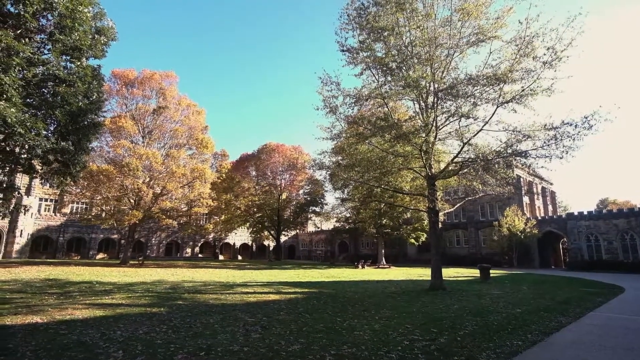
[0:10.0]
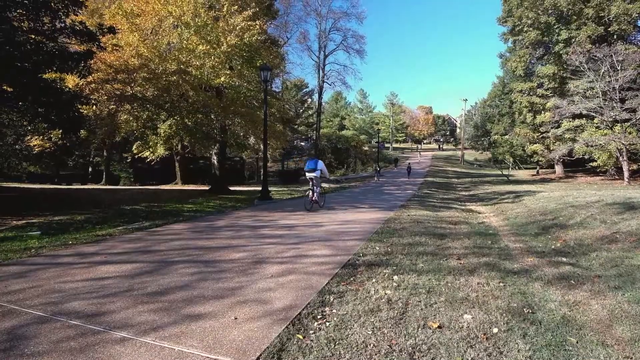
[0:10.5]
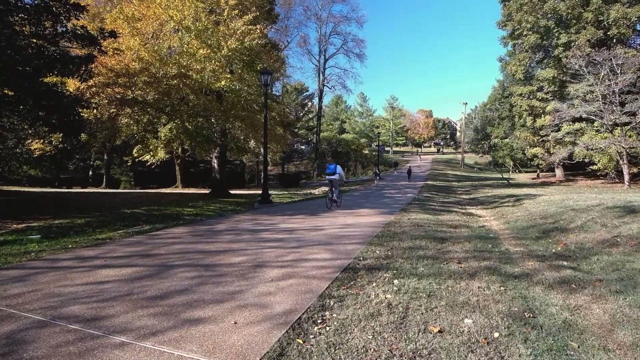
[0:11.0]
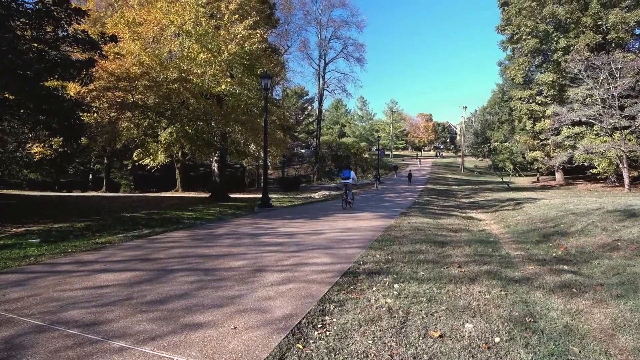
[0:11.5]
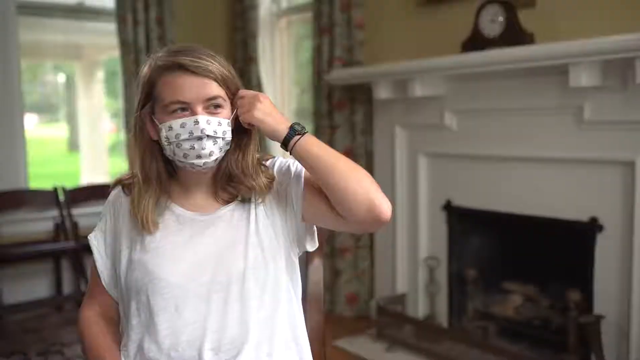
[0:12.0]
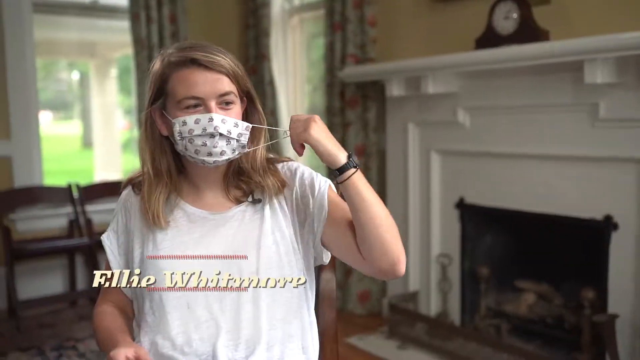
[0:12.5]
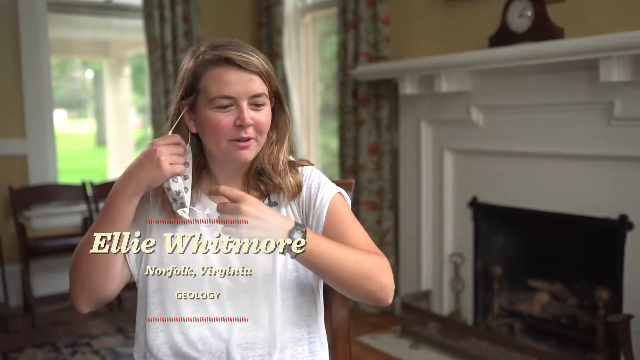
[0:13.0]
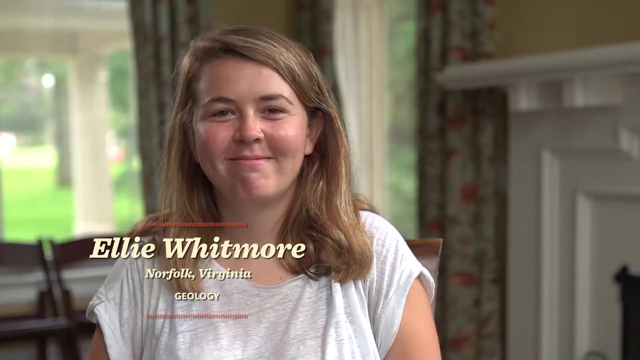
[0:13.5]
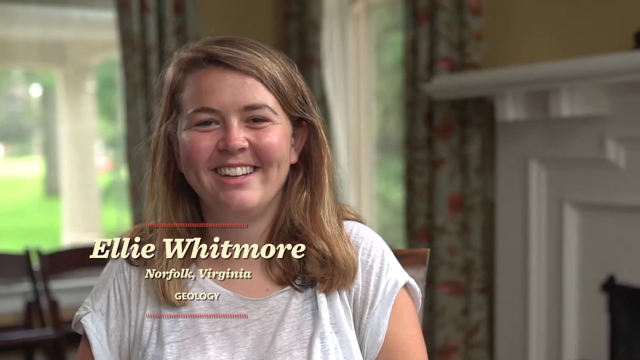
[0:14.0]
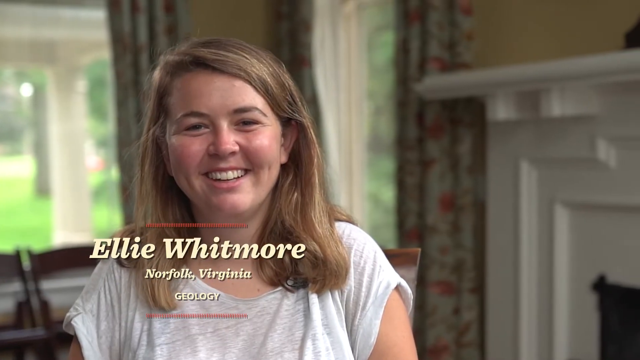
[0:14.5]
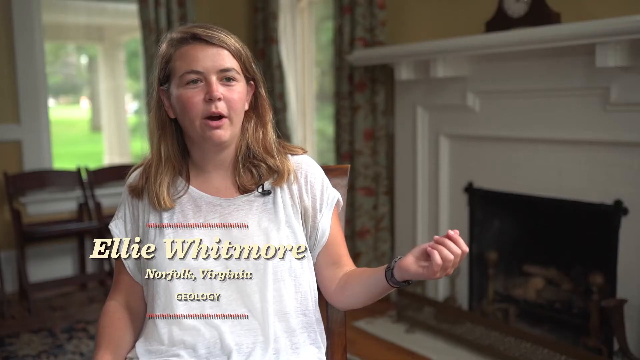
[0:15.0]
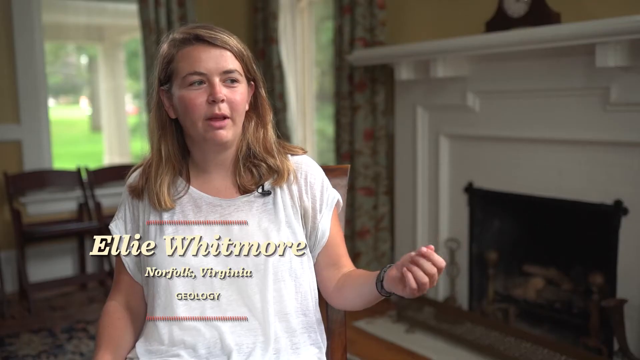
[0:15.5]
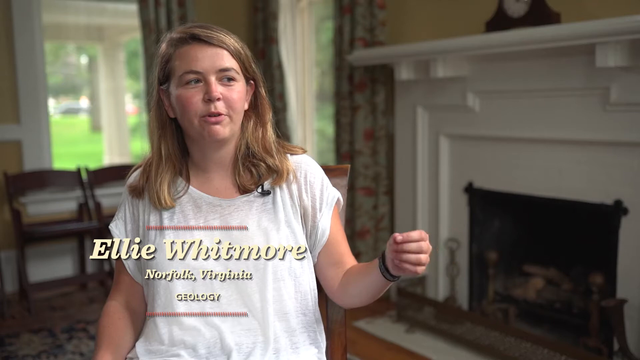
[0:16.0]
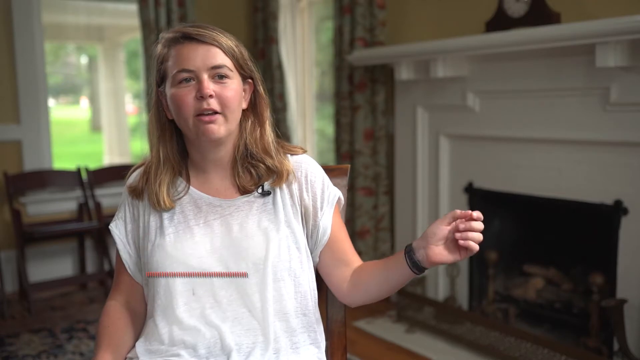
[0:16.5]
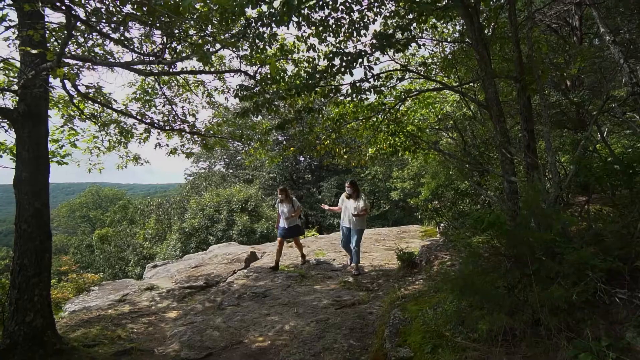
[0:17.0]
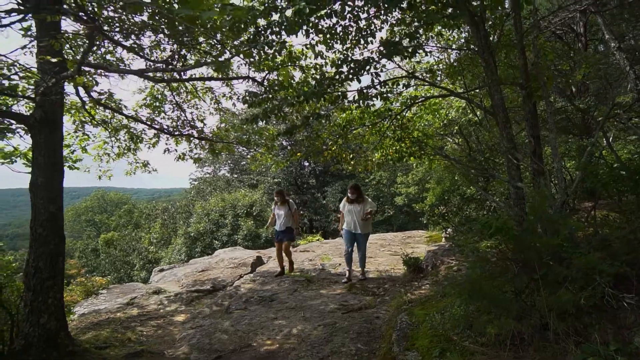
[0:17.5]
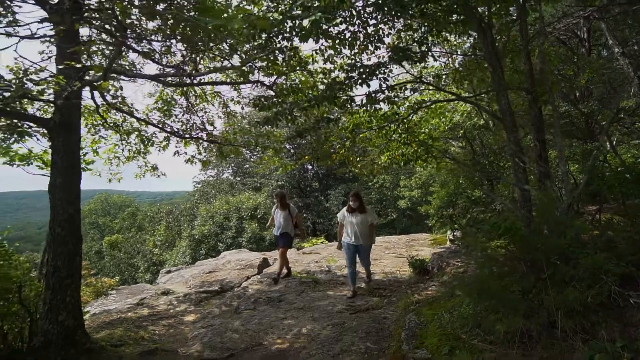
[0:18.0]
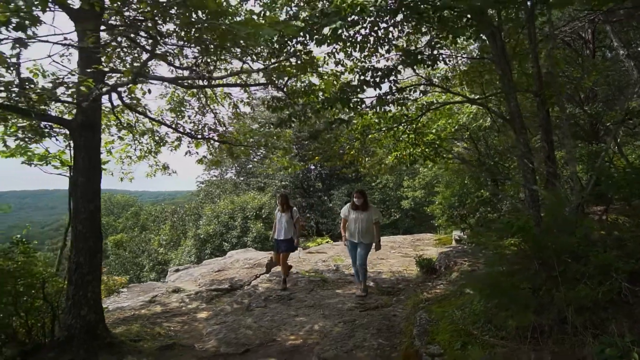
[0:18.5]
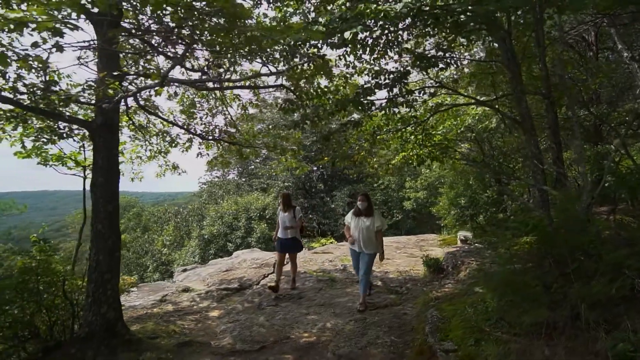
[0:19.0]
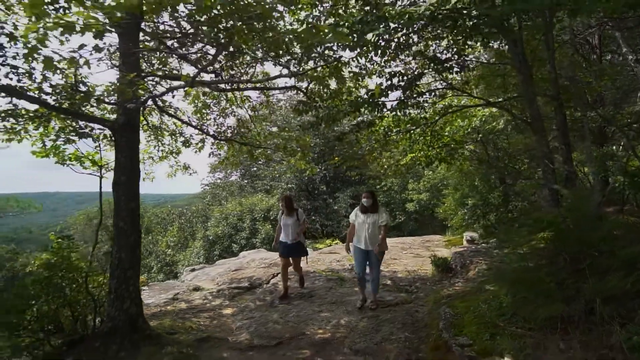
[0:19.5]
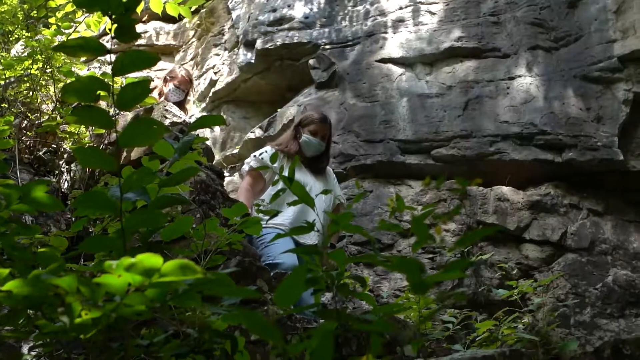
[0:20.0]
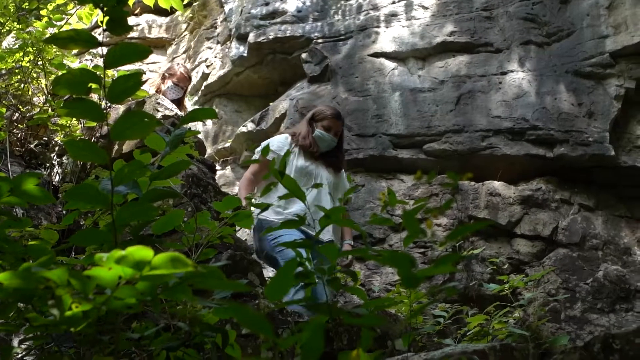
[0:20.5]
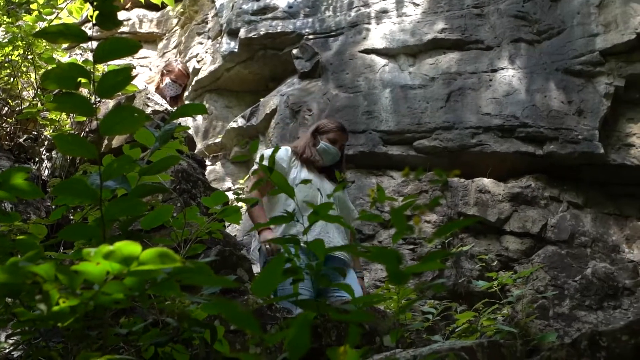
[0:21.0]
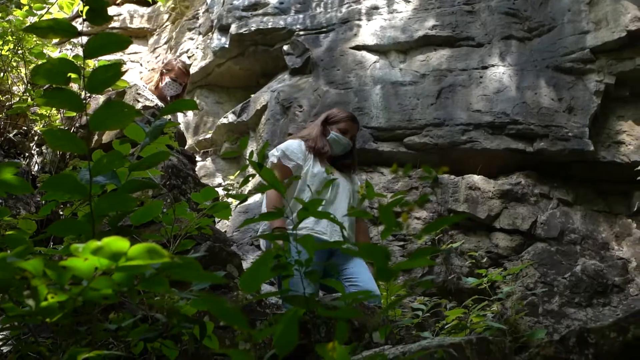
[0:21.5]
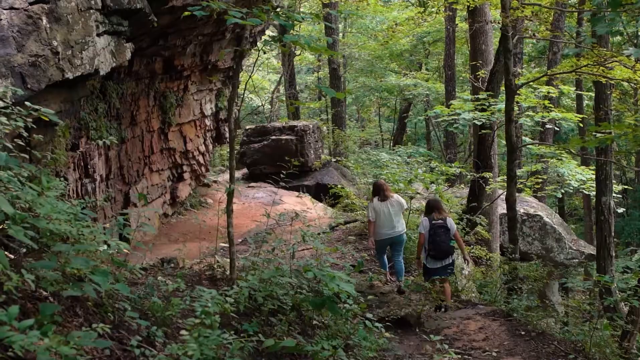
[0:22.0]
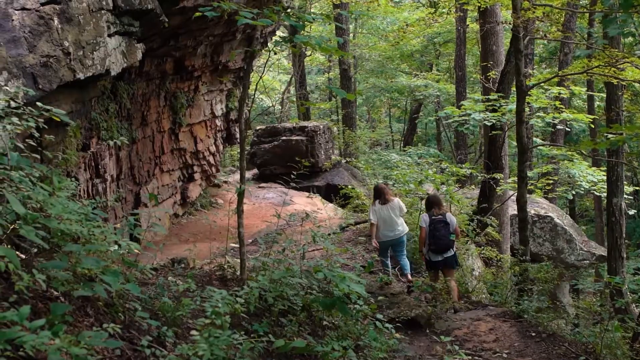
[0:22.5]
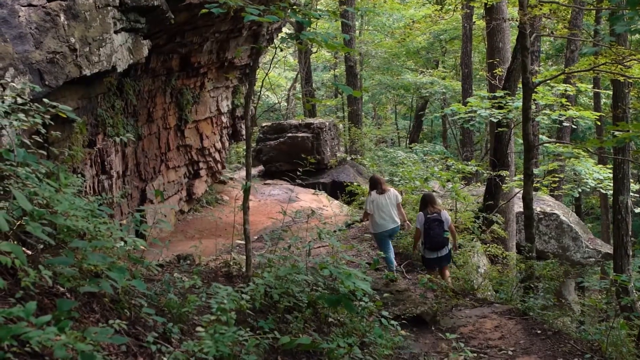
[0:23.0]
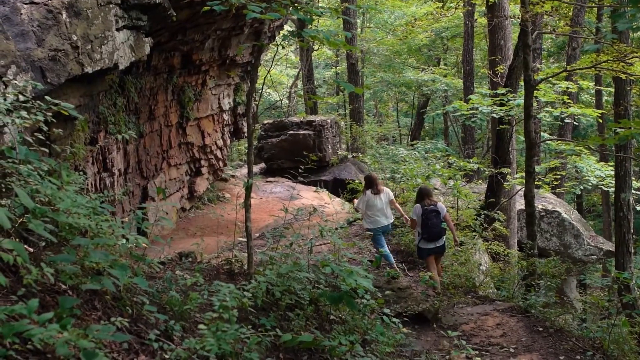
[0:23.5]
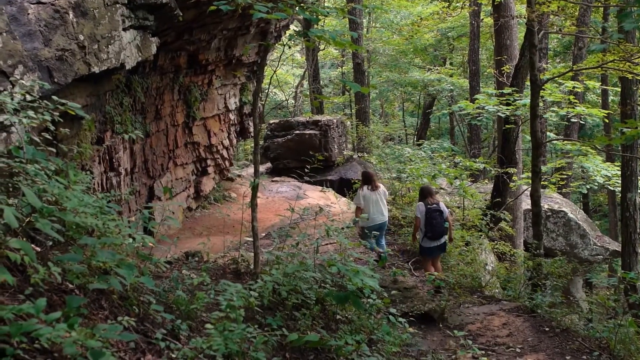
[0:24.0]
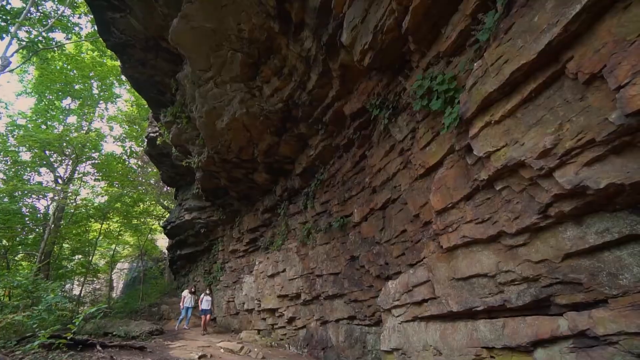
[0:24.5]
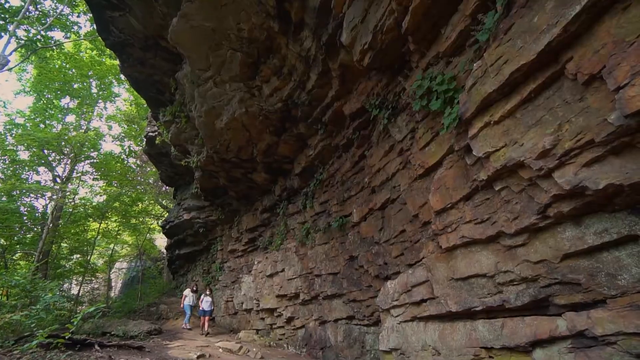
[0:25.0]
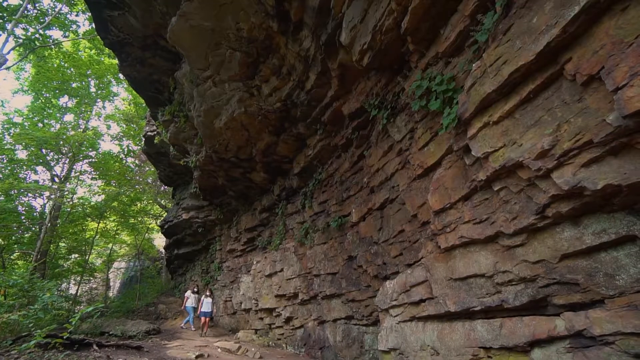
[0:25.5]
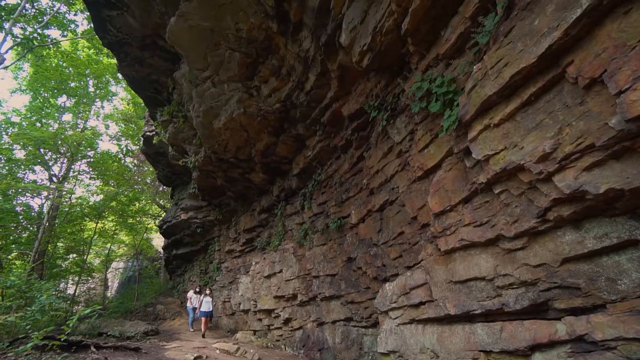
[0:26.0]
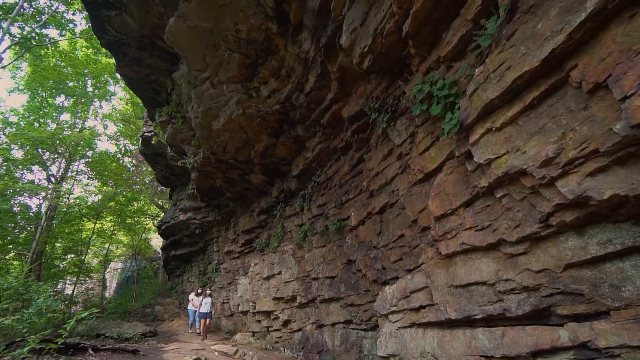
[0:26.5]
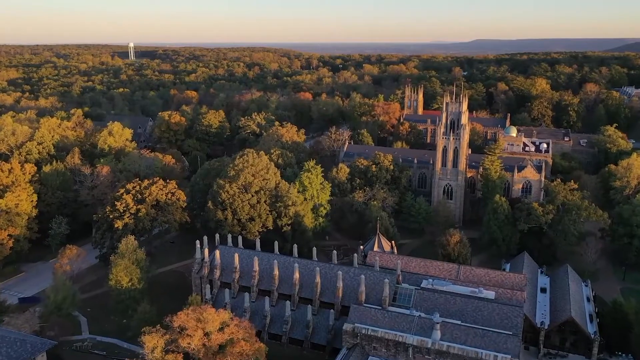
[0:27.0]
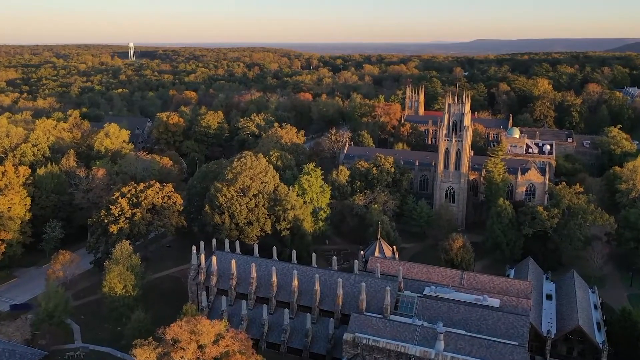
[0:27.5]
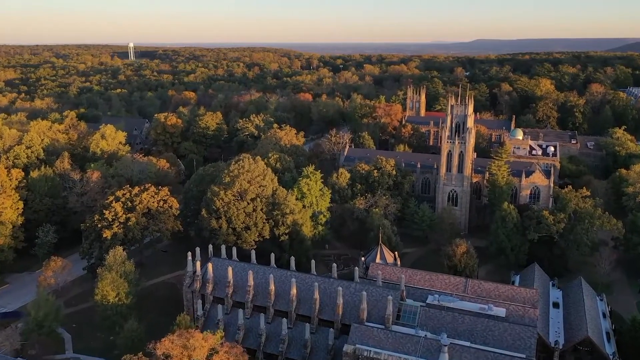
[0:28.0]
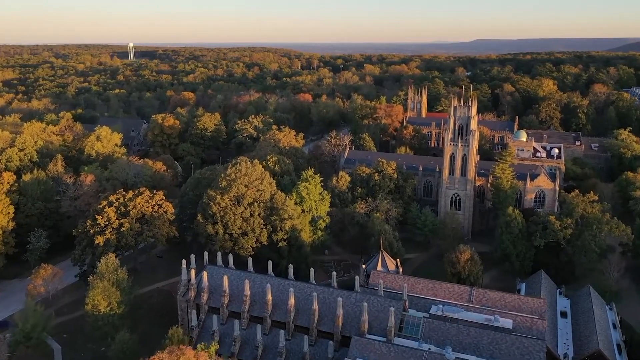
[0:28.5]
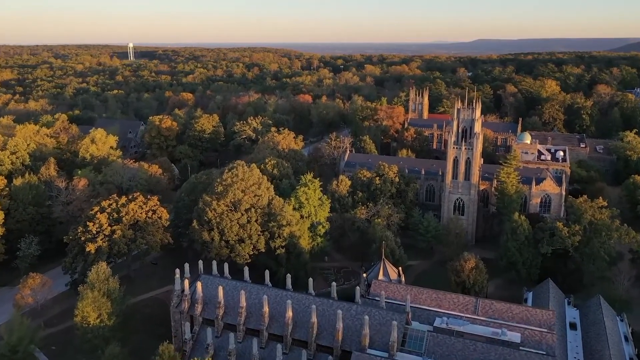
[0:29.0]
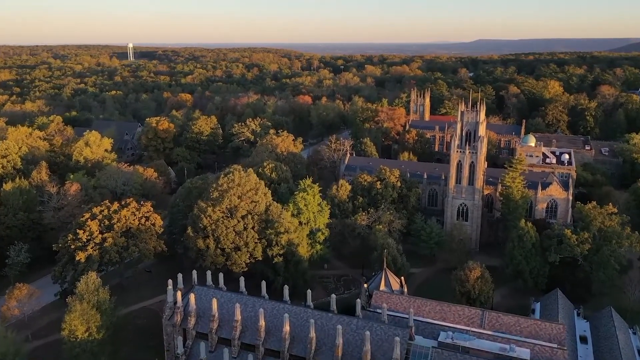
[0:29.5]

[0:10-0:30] People walk in the background of a road while a man rides his bicycle. On both sides of the road the grass is short and green, and there are many beautiful trees. A woman then appears inside a house, with a fireplace behind her, yellow-painted walls with some windows, and a few wooden chairs in the background. She seems to be in her 30s, is blonde and wears a white t-shirt. Her name is Ellie Whitmore, she is from Norfolk, Virginia, and she dedicates herself to geology. She is then seen with another blonde woman wearing shorts and a white t-shirt as they walk through woods and trails where some mountain formations are visible. An aerial view follows, showing tall grey buildings in the middle of a fairly dense forest.